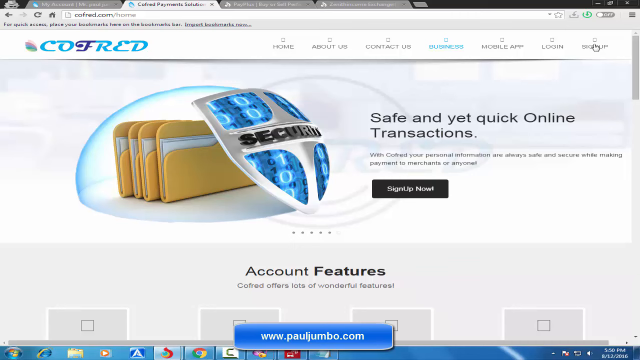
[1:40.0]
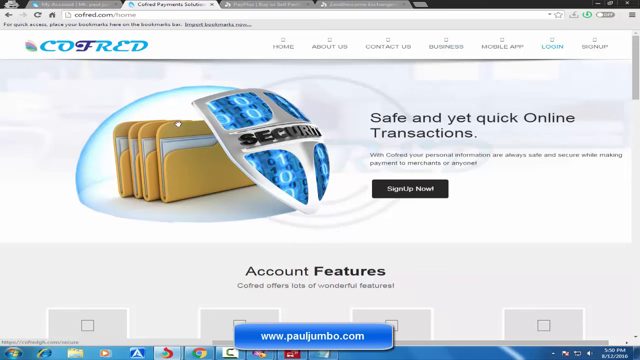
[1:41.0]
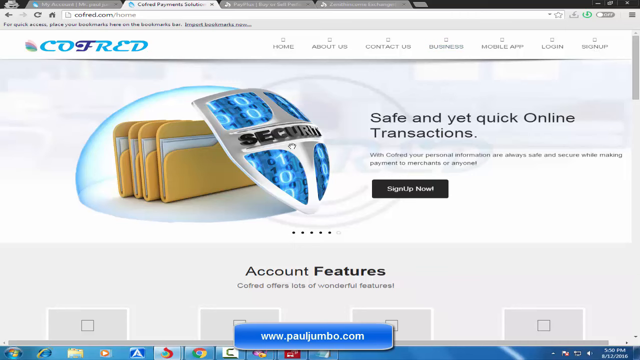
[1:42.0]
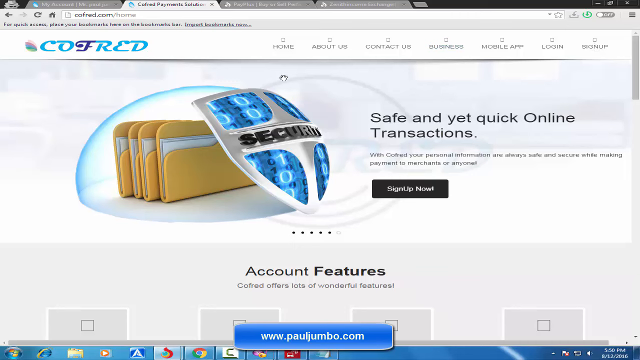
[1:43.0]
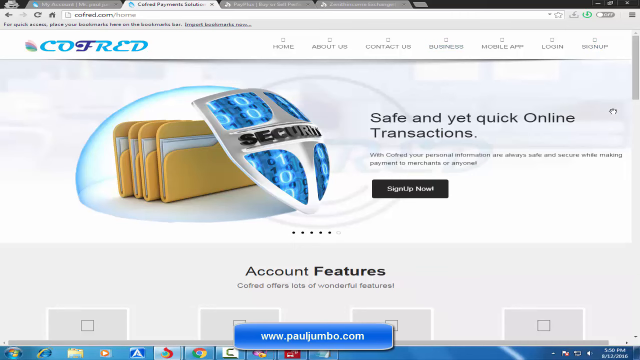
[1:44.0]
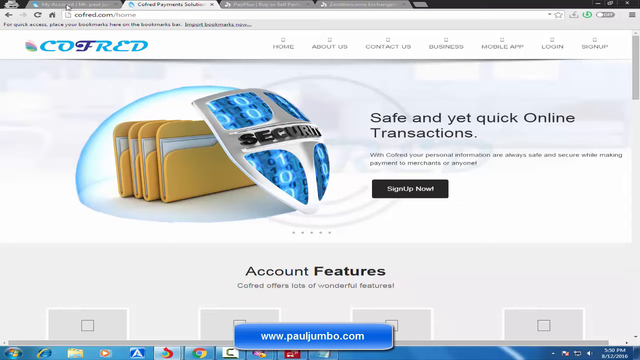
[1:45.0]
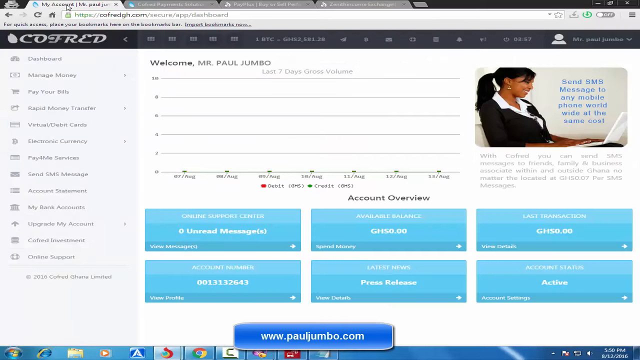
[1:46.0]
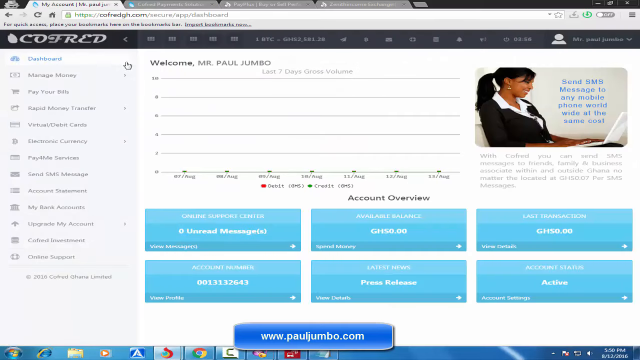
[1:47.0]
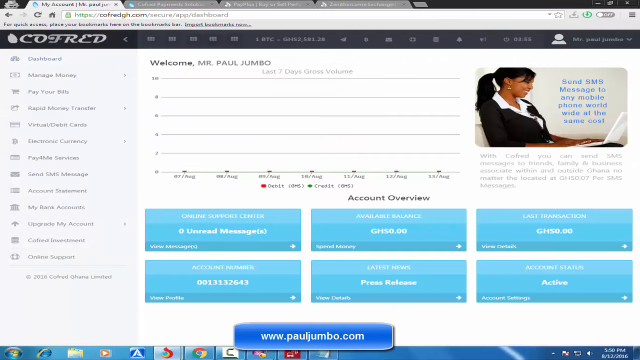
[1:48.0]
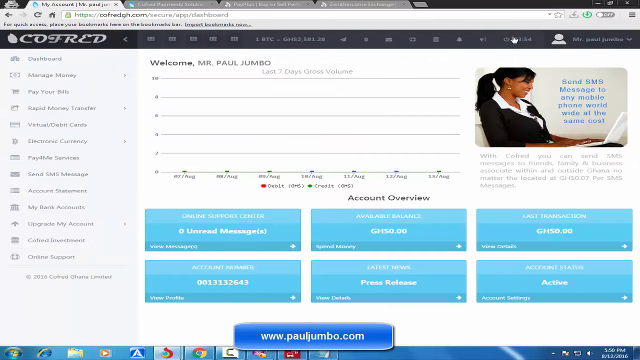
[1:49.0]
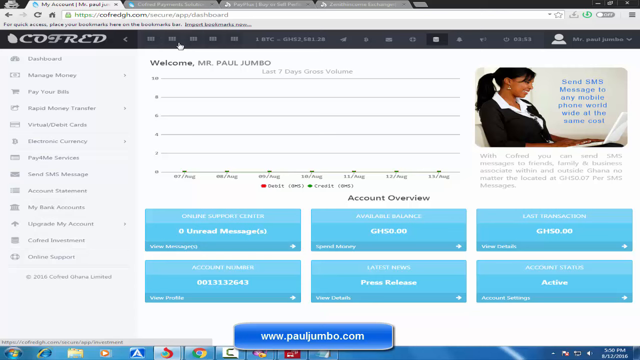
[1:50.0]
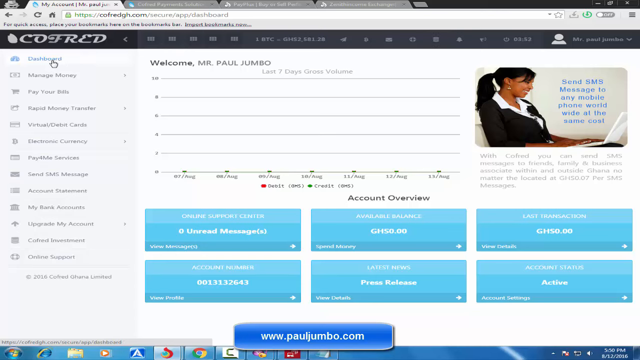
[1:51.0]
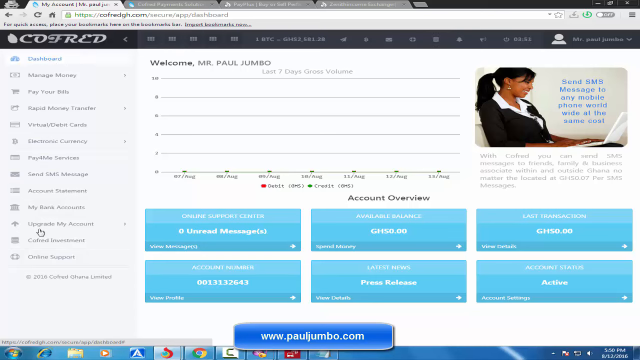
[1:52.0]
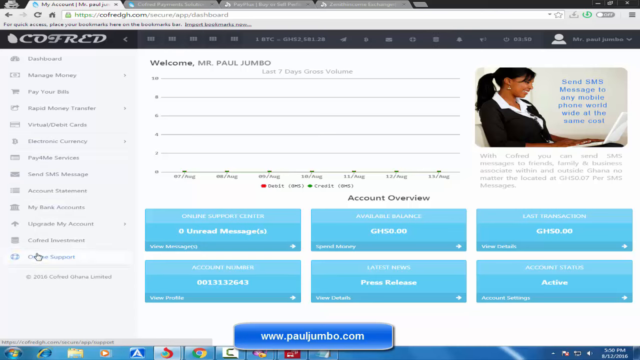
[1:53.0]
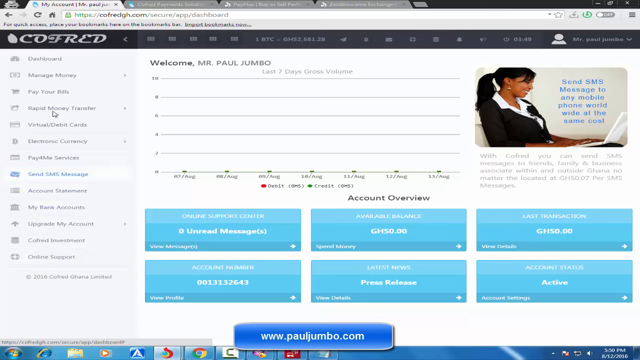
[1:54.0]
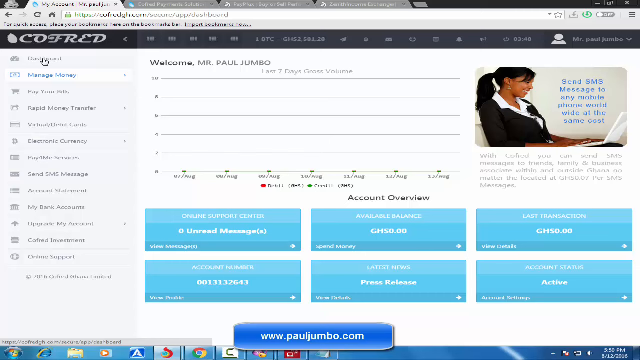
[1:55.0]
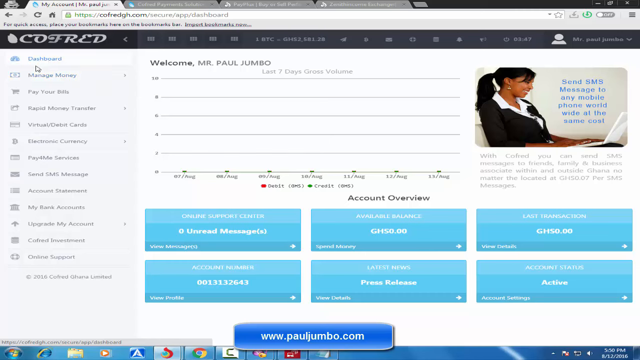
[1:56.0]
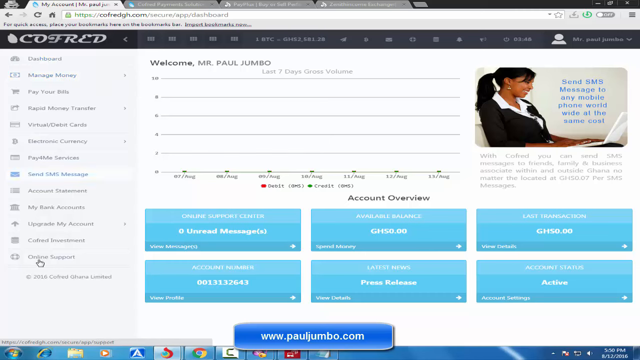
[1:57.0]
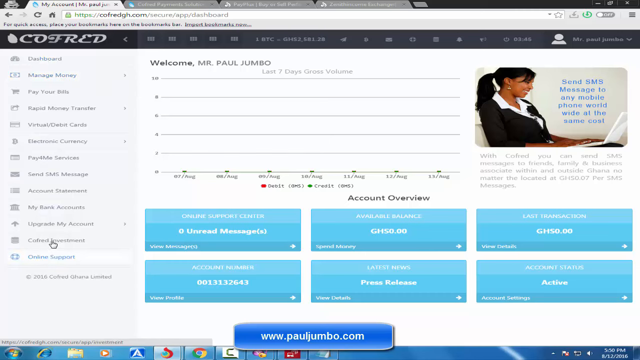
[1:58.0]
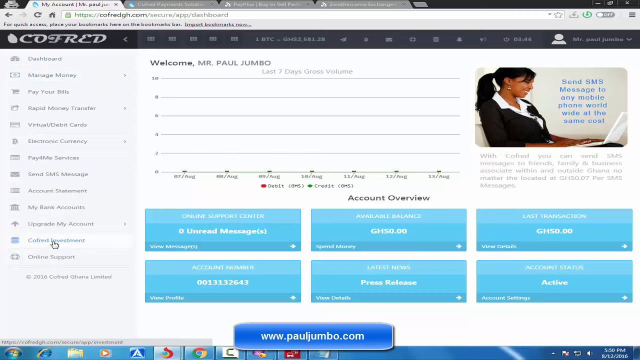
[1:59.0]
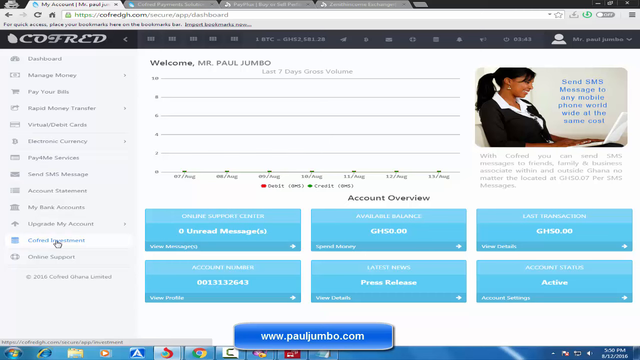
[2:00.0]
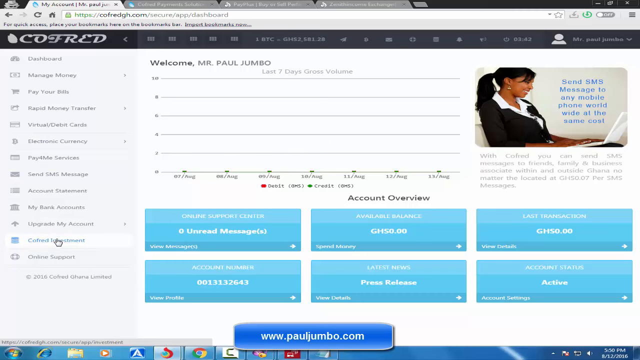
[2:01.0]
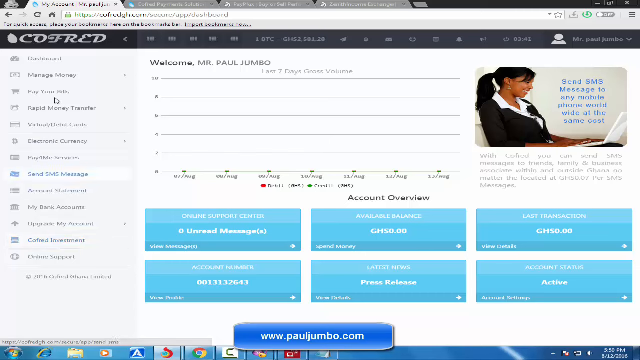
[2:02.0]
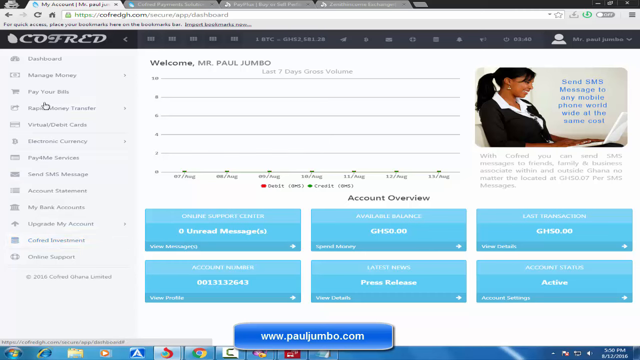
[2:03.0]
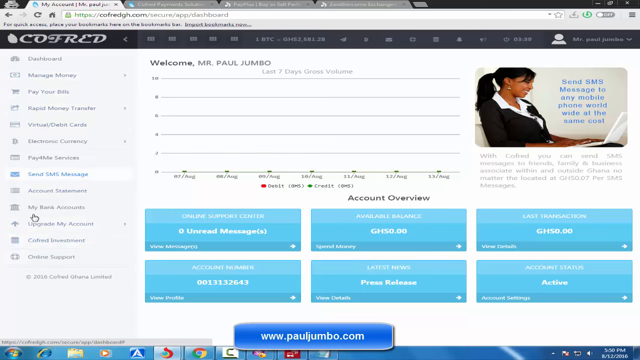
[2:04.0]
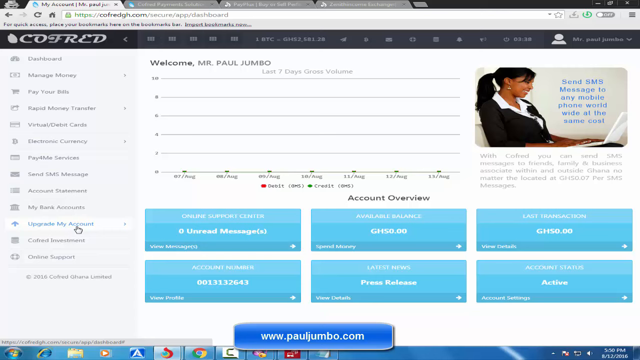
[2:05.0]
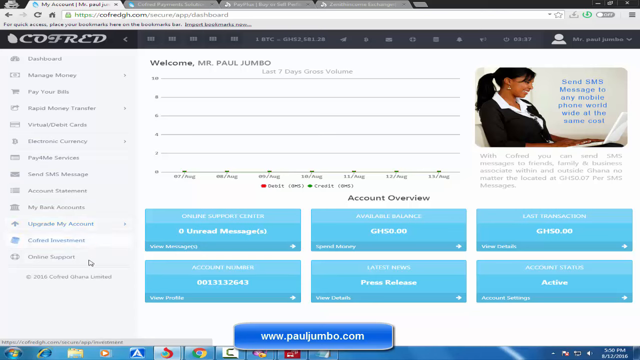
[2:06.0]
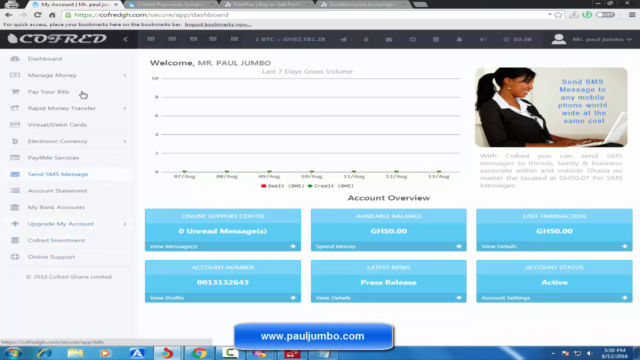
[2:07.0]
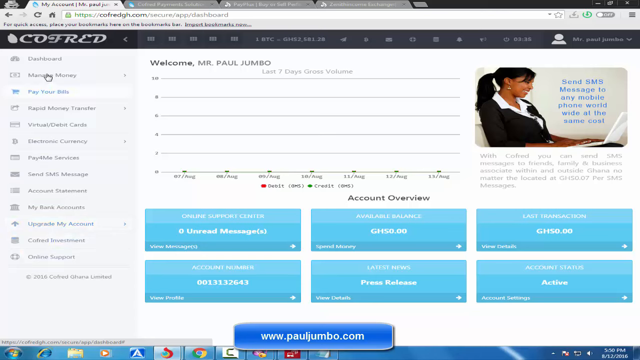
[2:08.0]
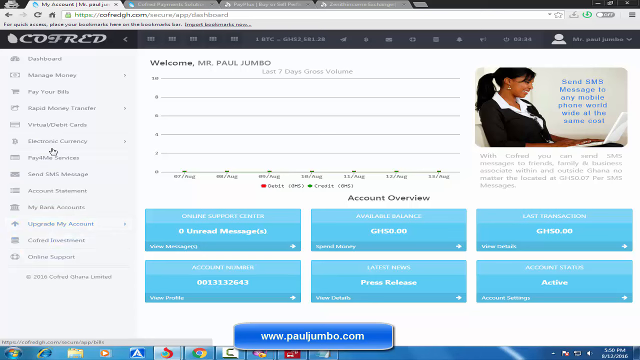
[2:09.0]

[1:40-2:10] The blue shield has silver linking its four blue areas. To the right it says "safe and yet quick online transactions", followed by two sentences and a black box that says "sign up now". On the left, under the shield, are four files that the shield appears to be protecting, with light blue around them emanating from the shield. On the right is a lighter, kind of grayed-out area, as if highlighting the shield. There are four dots under the shield, then the text "curated offers and wonderful features". A ribbon at the top says "C-O-F-R-E-D". The cursor clicks on the very first of the tabs at the top, opening something that looks almost like an email-type page, with lines showing the web address and the search bar. Below is a black ribbon with "C-O-Y-R-E-D", beside which are multiple small clickable areas: six directly to the right, then some words, then about eight more icons, and at the far right a silhouette of a person.